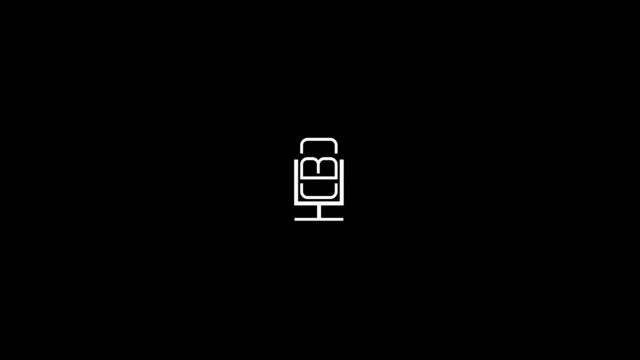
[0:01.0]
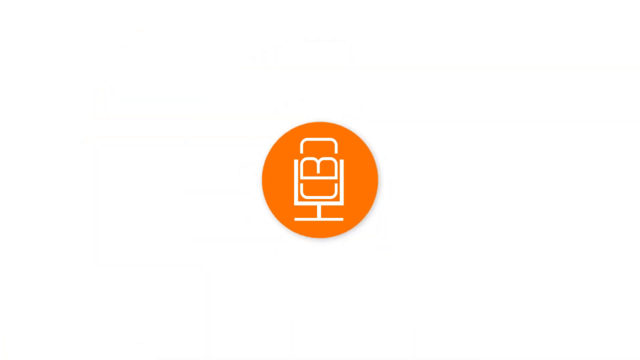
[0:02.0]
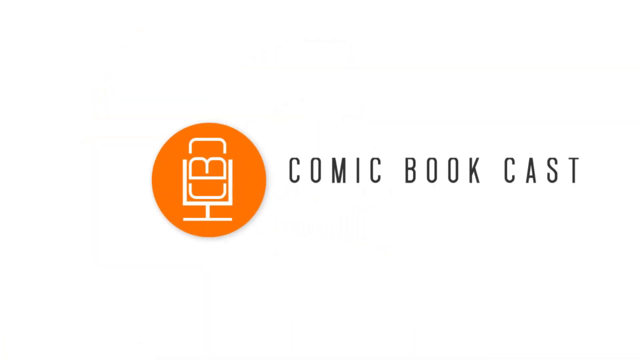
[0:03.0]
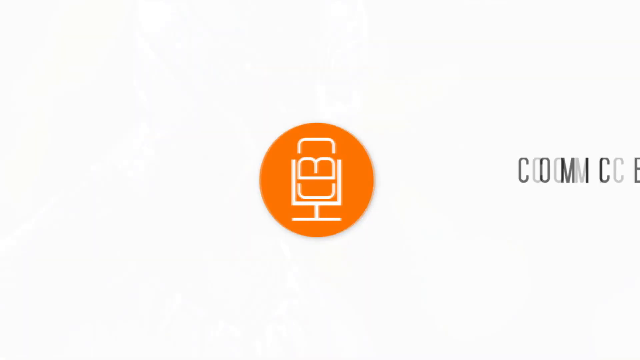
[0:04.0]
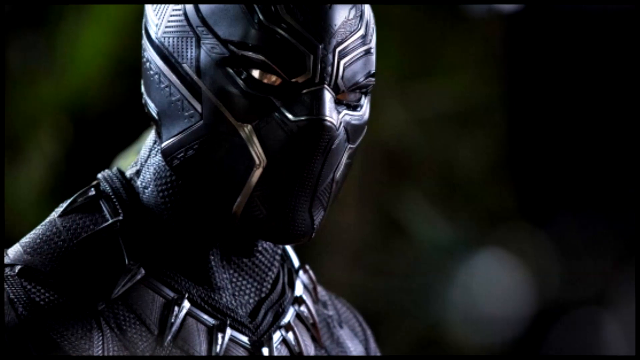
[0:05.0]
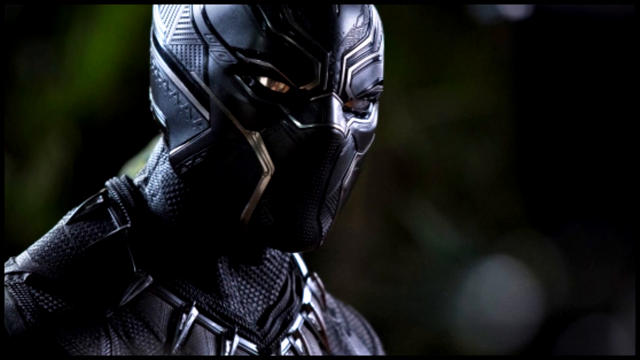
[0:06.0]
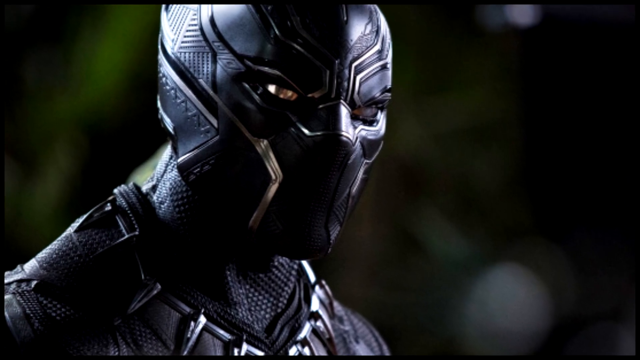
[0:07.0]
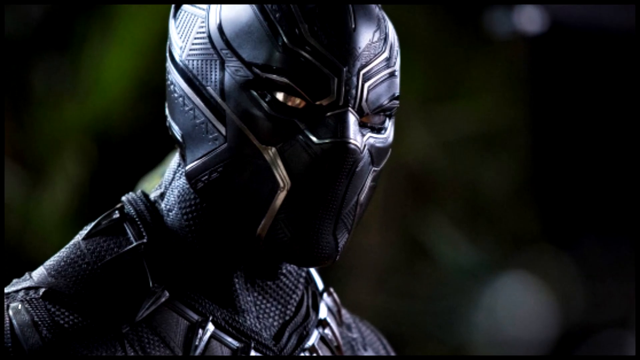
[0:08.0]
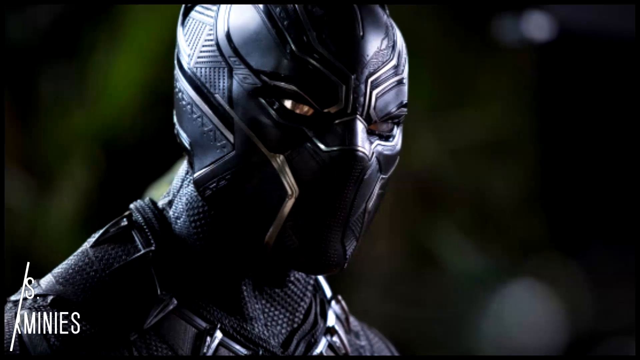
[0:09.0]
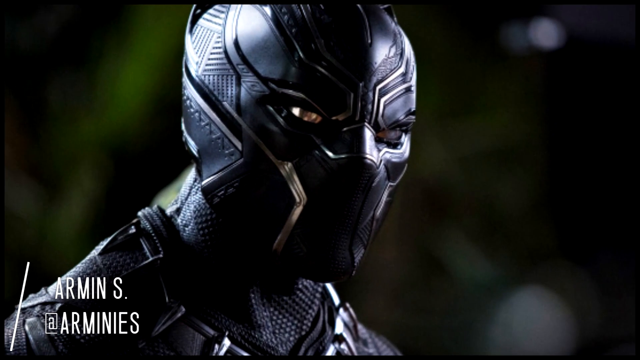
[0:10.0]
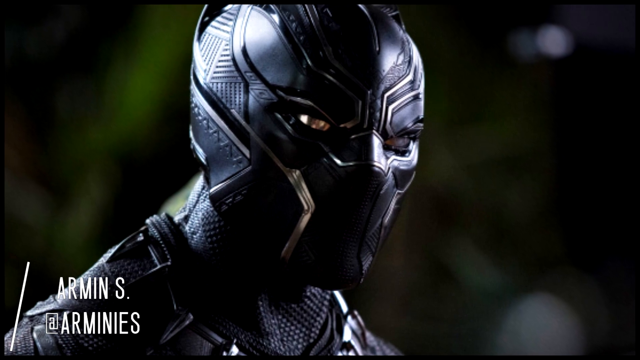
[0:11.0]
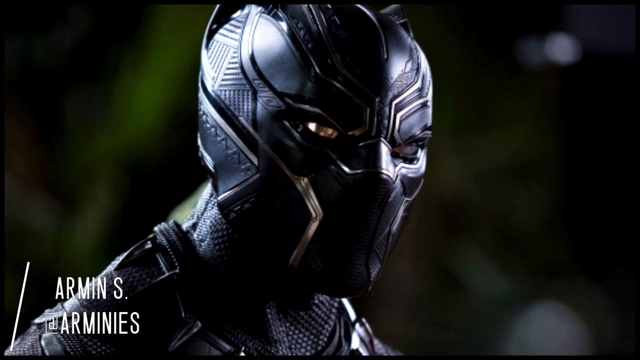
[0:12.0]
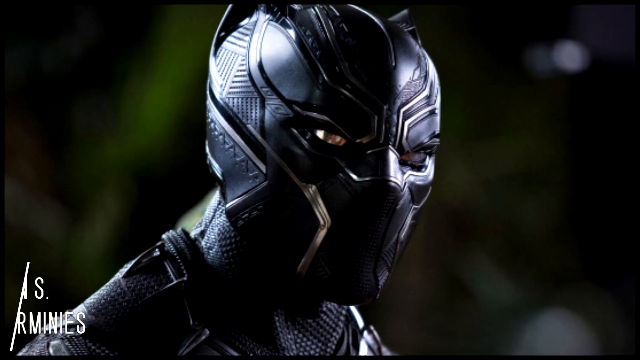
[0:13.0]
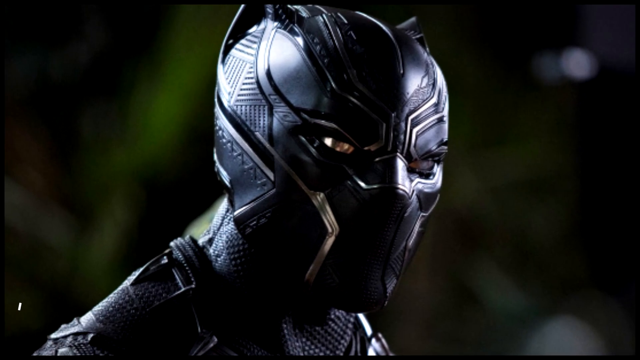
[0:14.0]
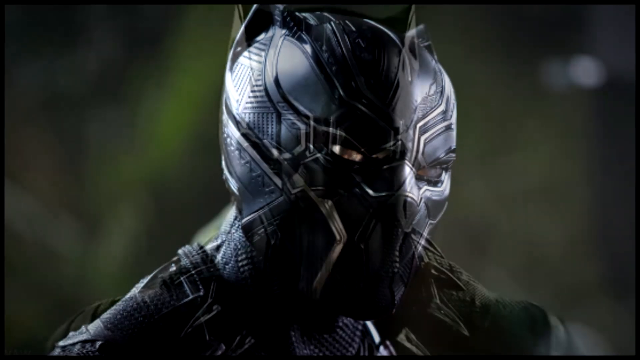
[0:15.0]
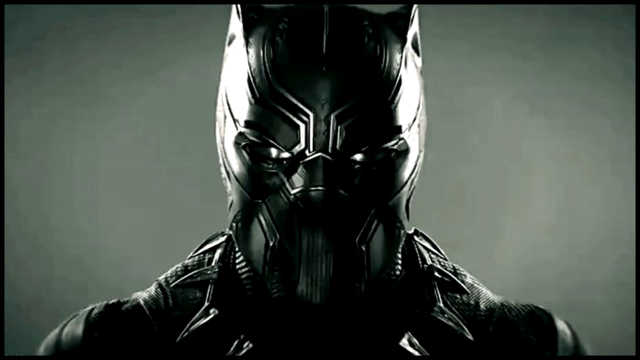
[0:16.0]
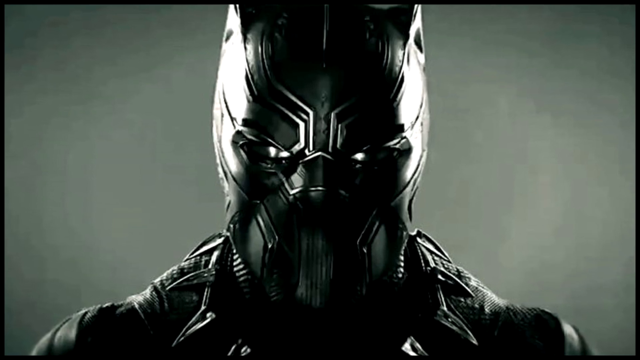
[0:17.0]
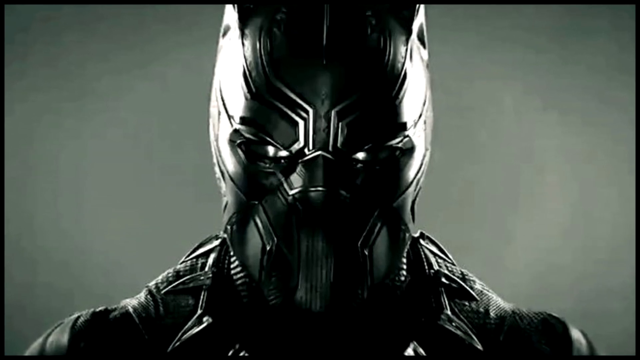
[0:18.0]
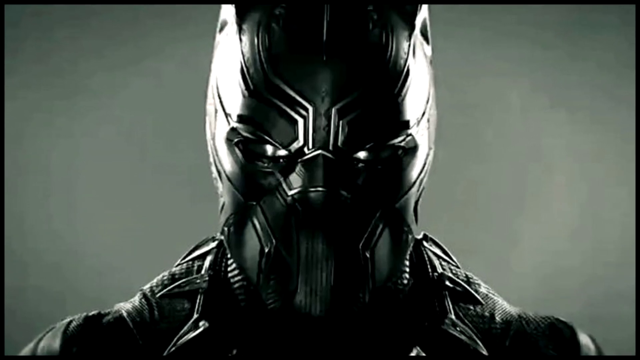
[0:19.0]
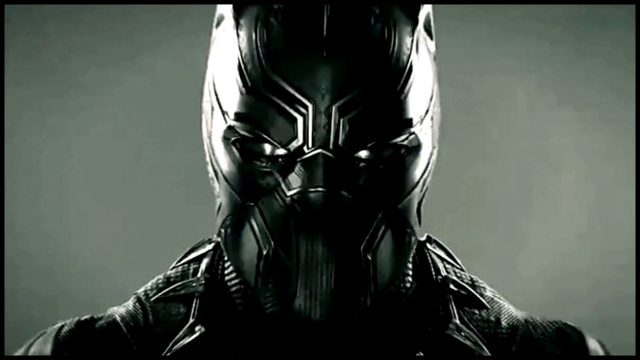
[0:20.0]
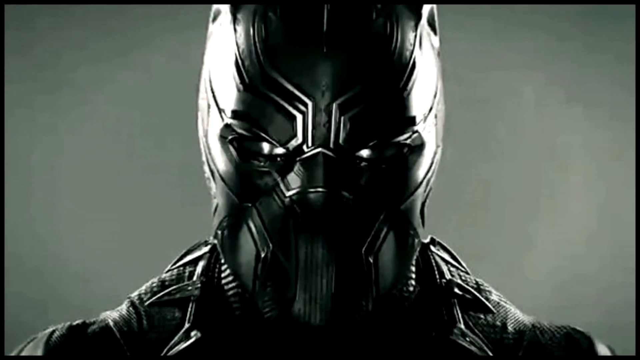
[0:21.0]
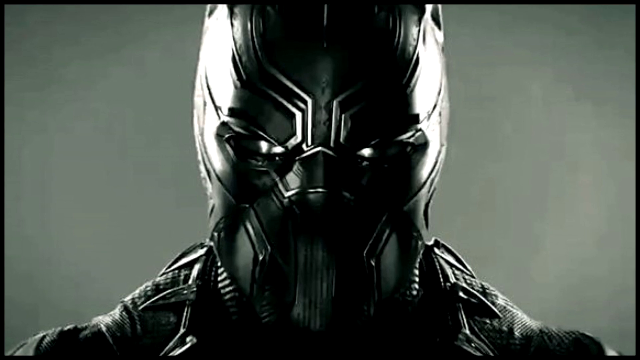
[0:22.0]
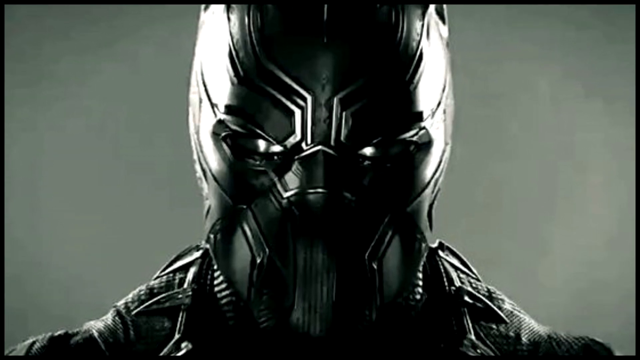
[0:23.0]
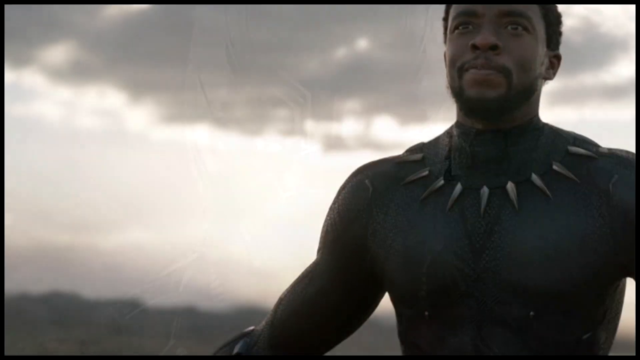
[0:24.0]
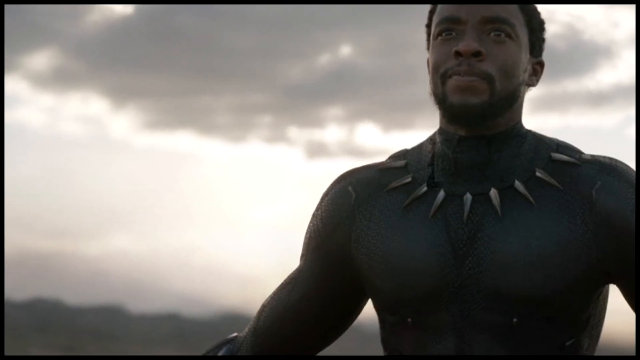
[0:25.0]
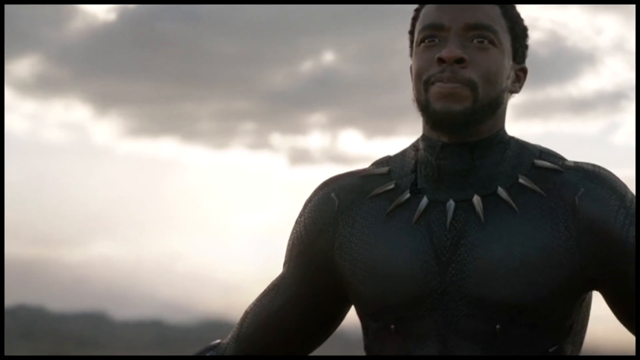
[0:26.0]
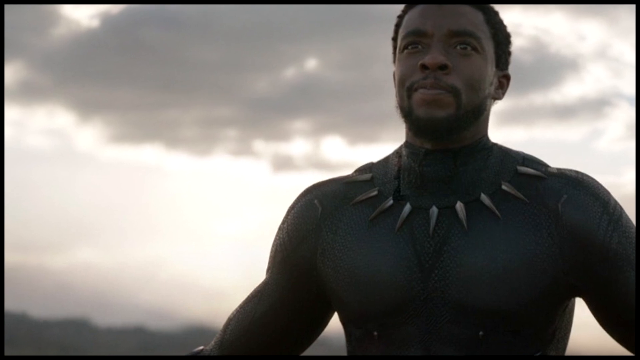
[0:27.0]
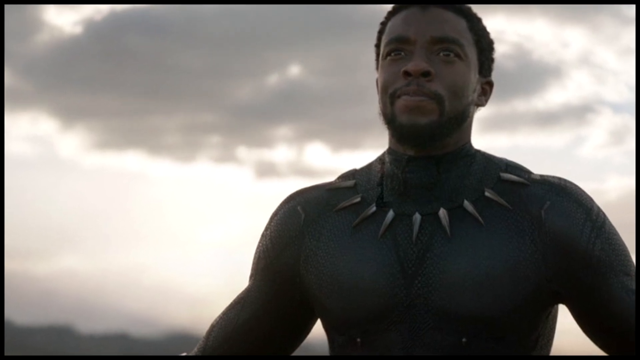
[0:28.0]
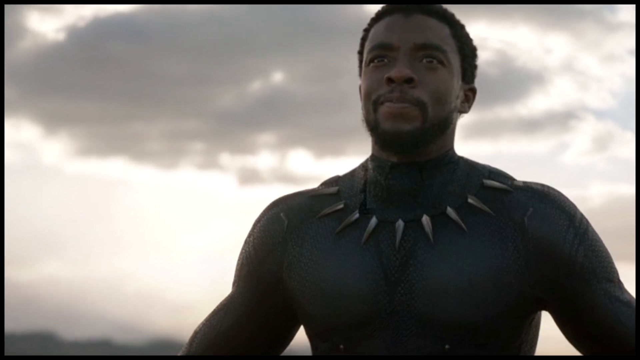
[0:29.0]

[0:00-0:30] The video opens on a black screen, followed by an image that looks like a microphone, which turns into an orange circle with some white imagery inside it. Black text reading "Comic book Cast" appears against a white background. Next comes a character from Black Panther who looks sinister. He wears a very dark mask, with brown leering eyes peeking out, and he looks toward the right of the screen. In the background is some green and black imagery that sort of suggests trees. A shadow is cast on the character's face and mask, along with some reflected light. His costume has some stripes, lines and zigzags but is mostly black. A front view follows of the Black Panther character leering into the camera, with pale gray behind him. Then the actor Chadwick Boseman is pictured wearing a necklace with spears coming out of it. He looks up at the sky with an intriguing, pensive expression. He has short dark hair and is bare chested. In front of him are gray clouds with some light coming out from behind them.